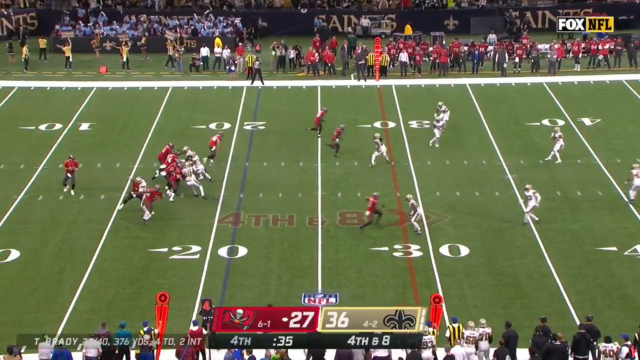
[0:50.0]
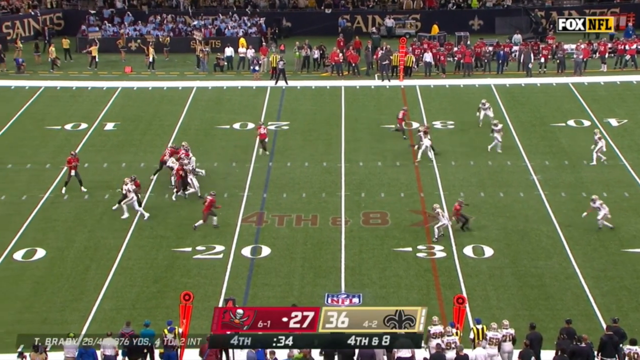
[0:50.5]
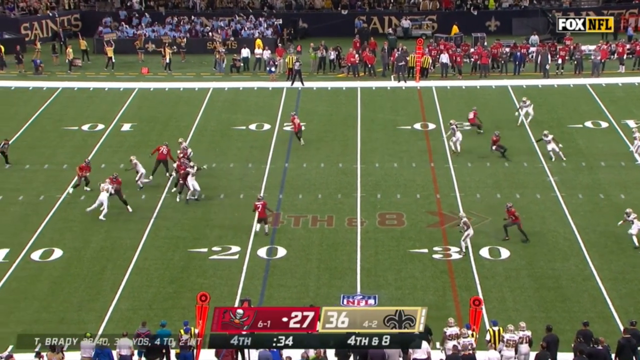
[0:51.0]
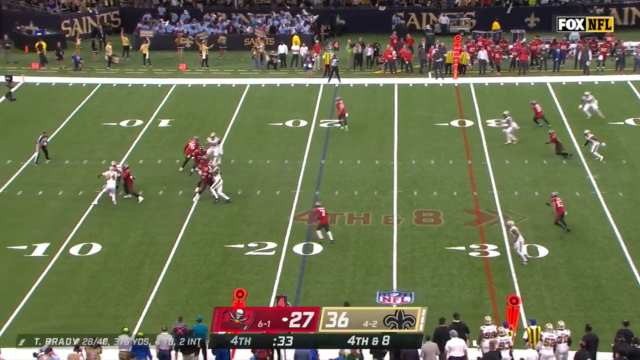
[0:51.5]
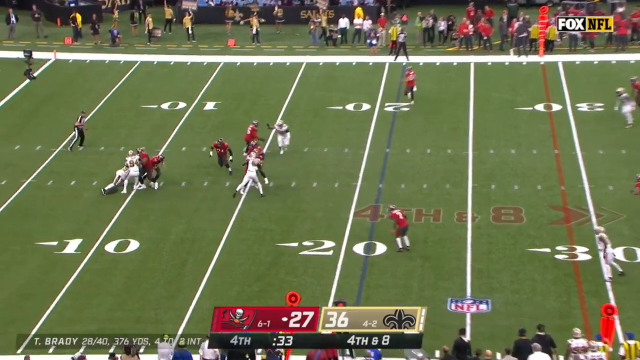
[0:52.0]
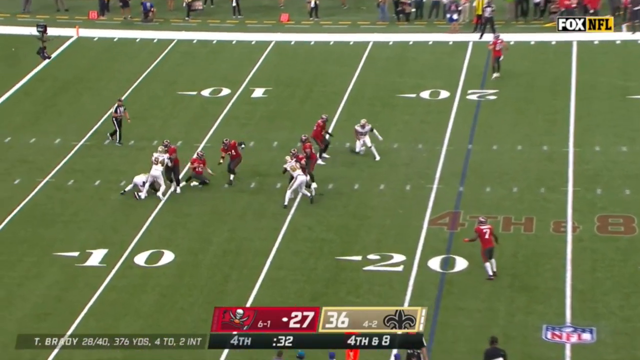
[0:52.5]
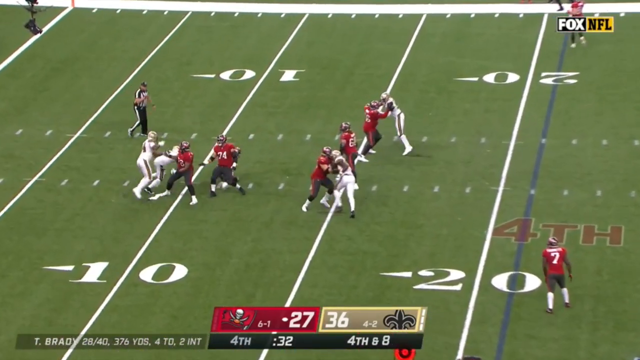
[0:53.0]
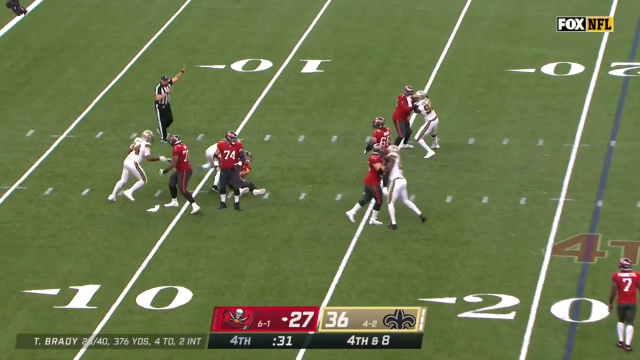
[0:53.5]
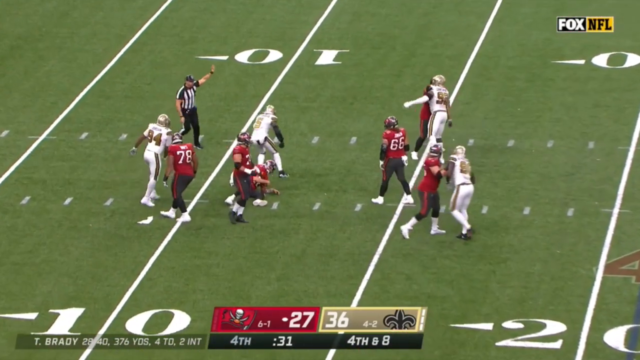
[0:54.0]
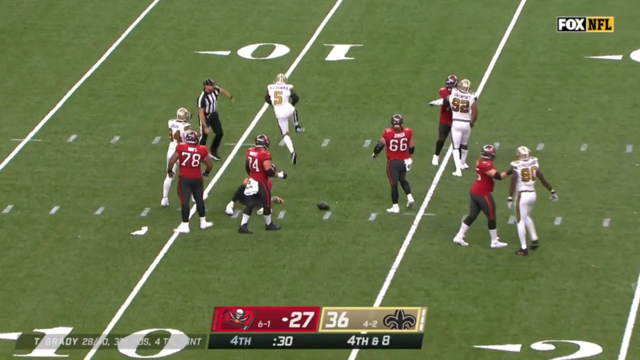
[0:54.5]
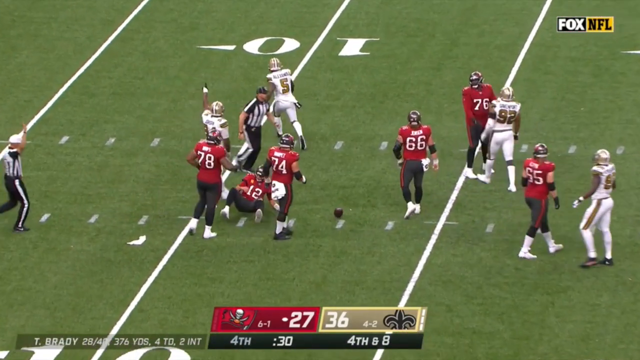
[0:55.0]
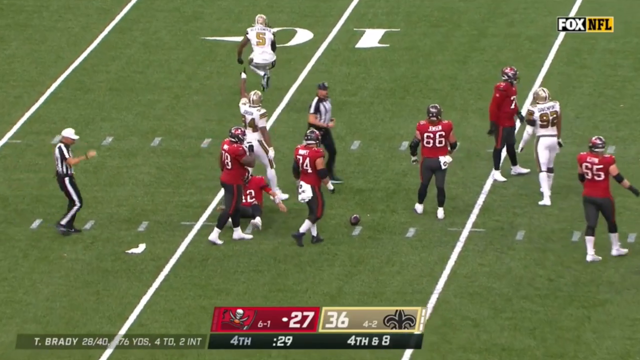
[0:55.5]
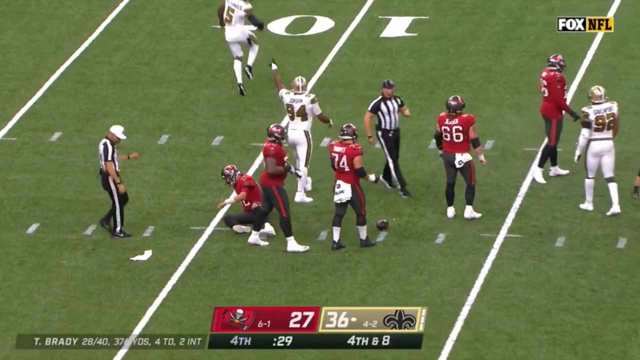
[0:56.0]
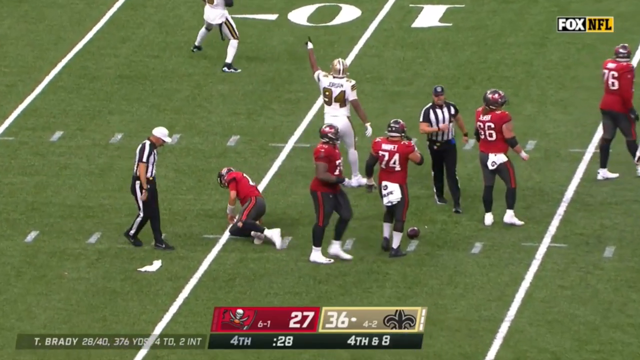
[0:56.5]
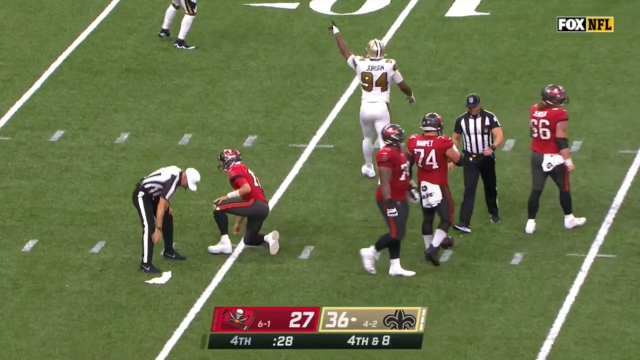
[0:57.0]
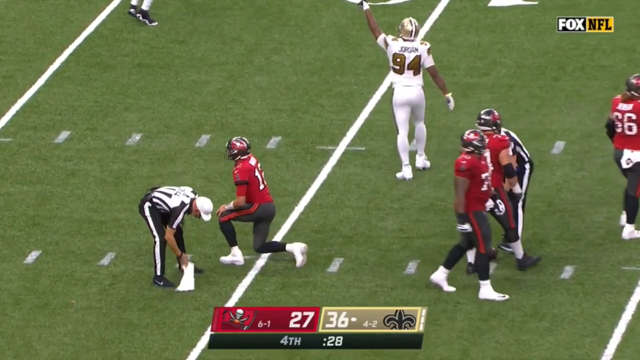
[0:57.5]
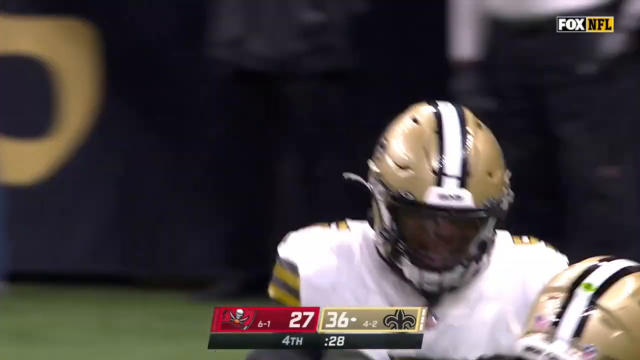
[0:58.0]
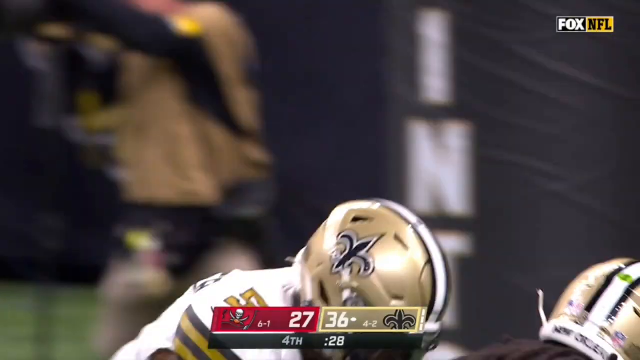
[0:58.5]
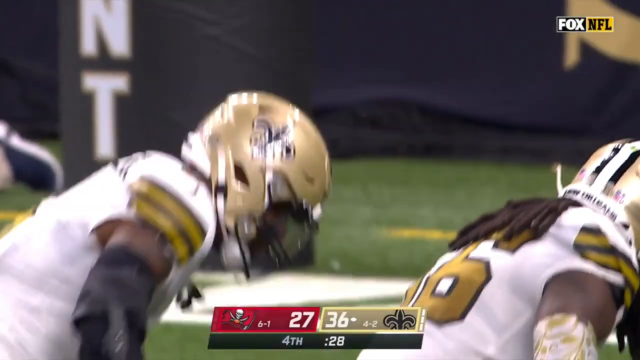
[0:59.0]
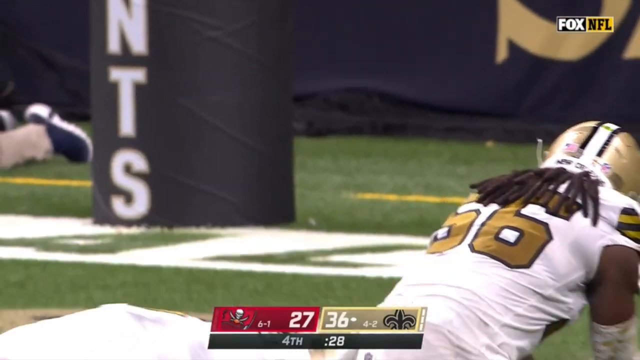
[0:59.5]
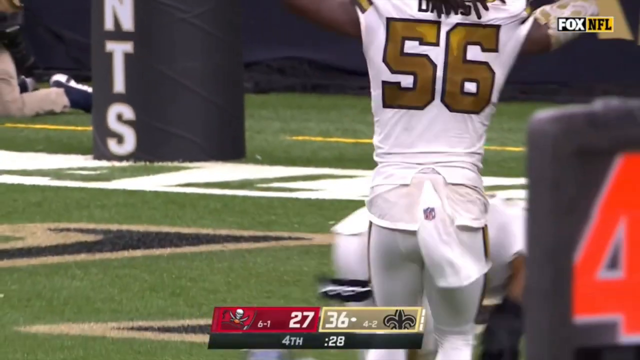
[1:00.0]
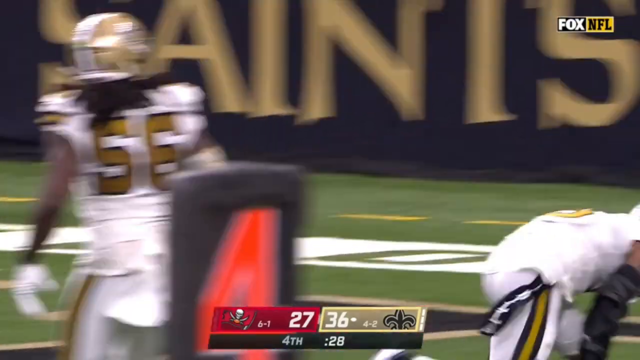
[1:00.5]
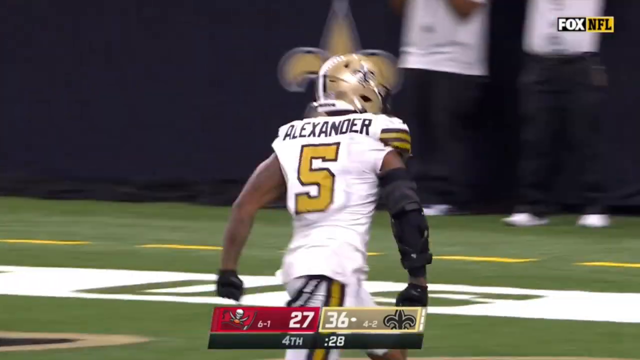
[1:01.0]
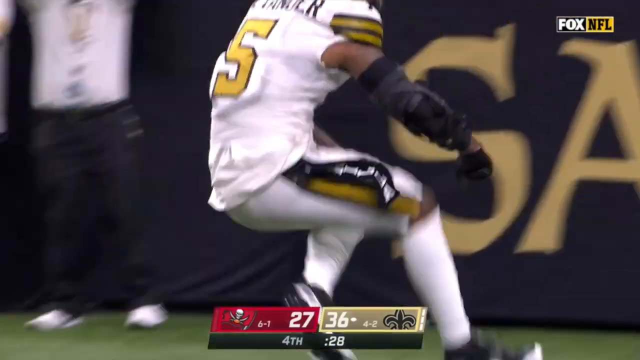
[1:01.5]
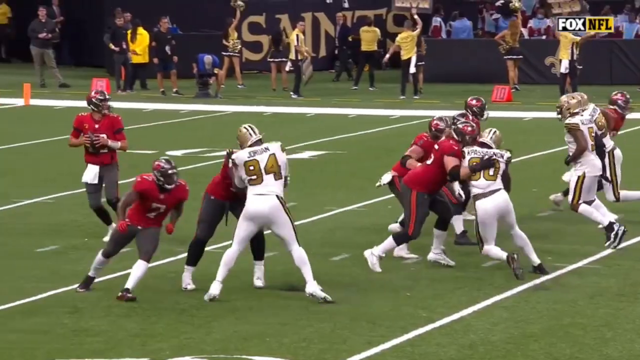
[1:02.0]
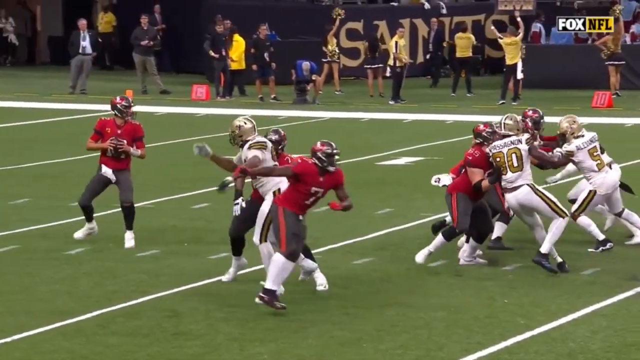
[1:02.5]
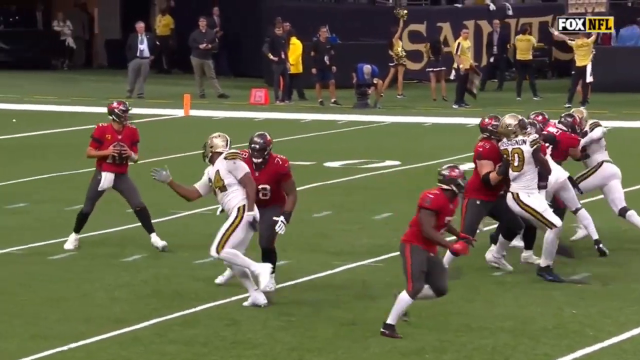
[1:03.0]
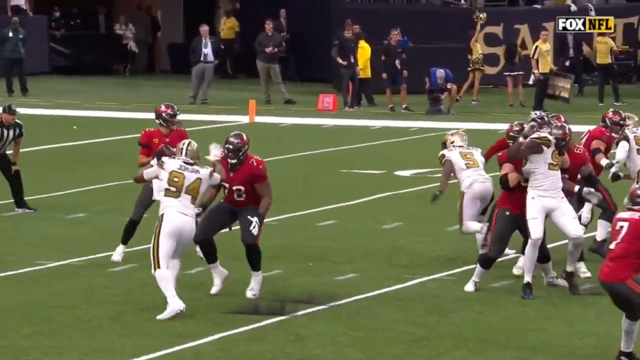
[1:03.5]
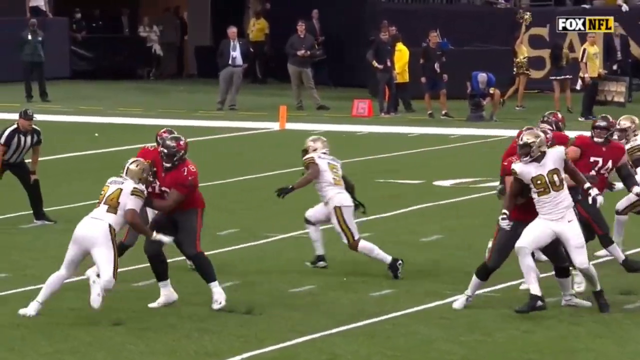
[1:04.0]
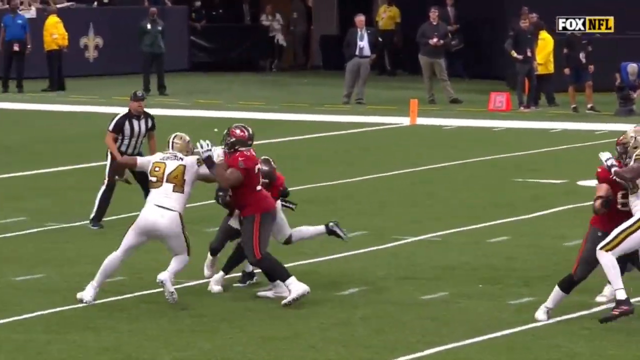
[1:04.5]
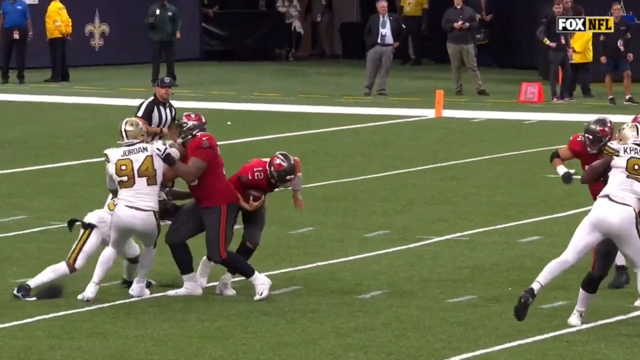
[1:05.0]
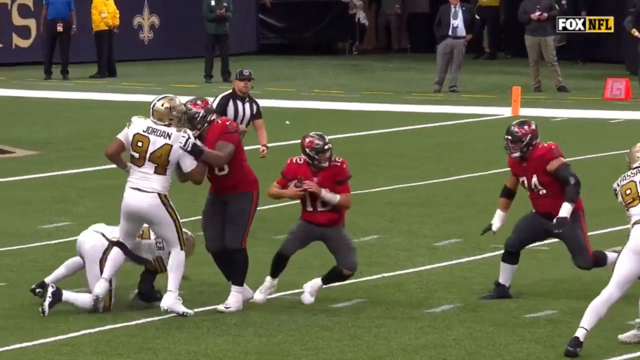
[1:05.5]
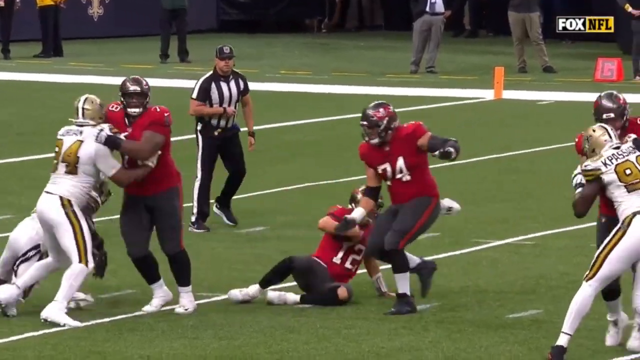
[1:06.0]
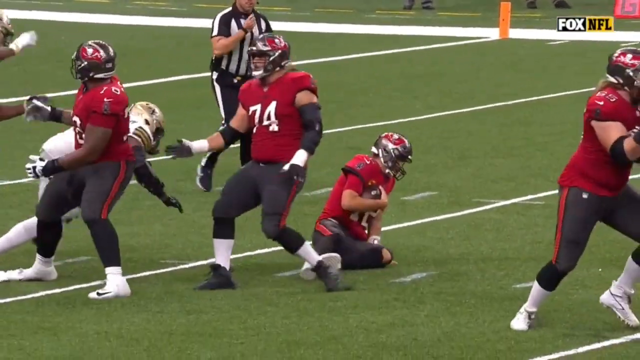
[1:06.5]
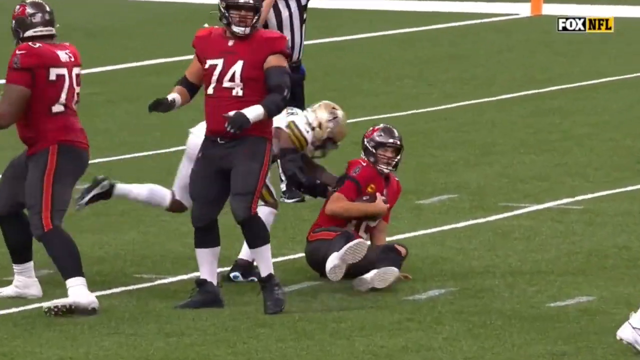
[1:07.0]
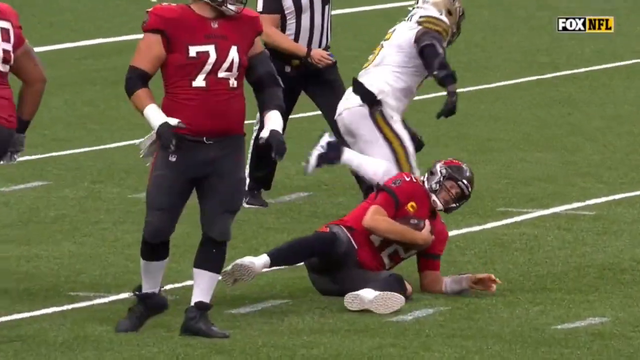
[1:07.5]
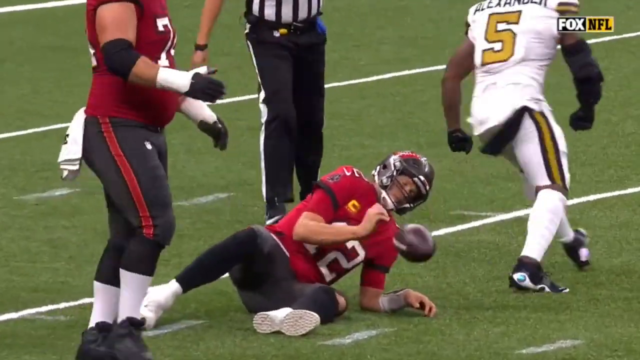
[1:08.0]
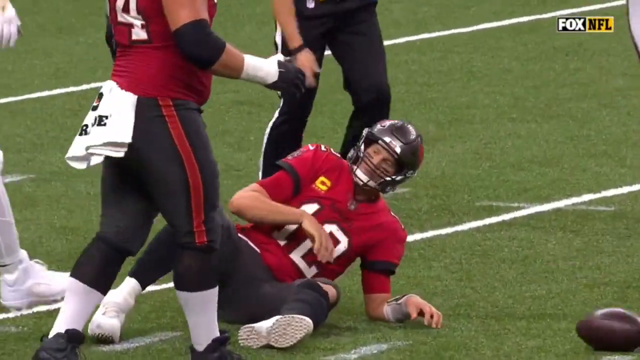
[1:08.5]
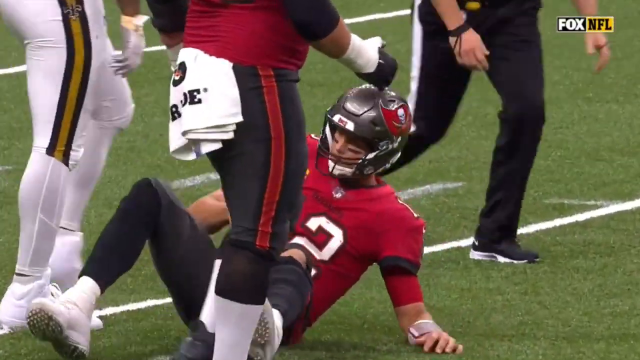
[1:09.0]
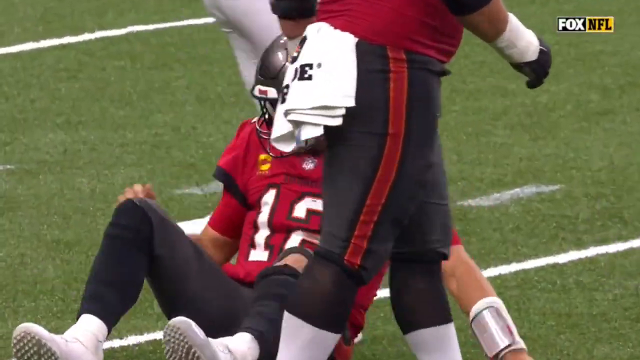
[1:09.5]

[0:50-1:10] Tom Brady goes for a Hail Mary with the score shown as 27-36, 33 seconds left in the fourth quarter, and 4th and 8. Brady goes down without being hit; his knee just touches the ground as he gets tripped up. The Saints celebrate their win, with number 5, Alexander, whose first name might be Gerard. A good number of Saints defenders mark the 40-yard line and the 30-yard line at the other end. Brady holds the ball and concedes the loss.